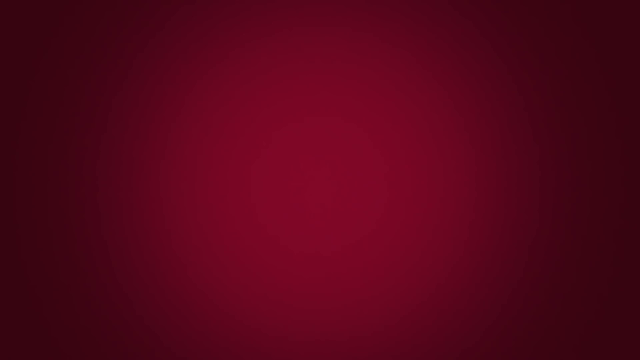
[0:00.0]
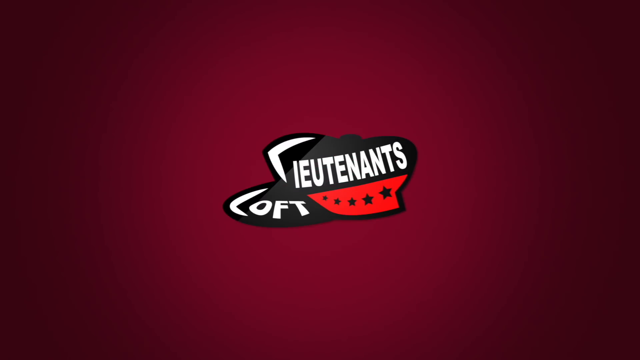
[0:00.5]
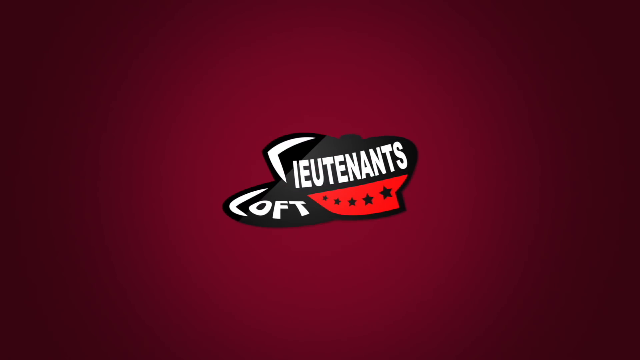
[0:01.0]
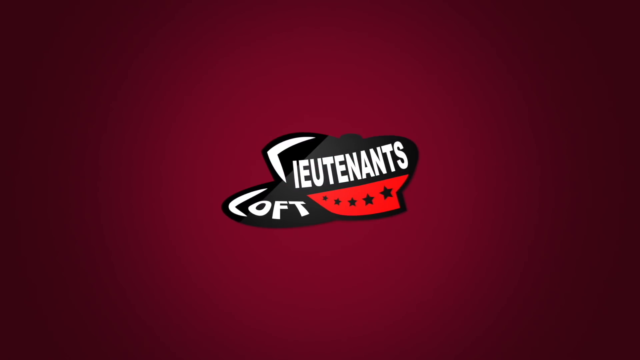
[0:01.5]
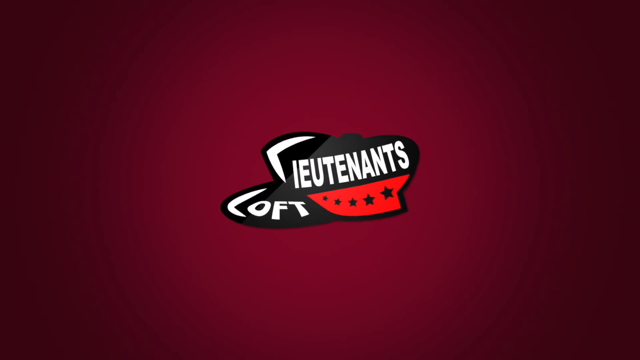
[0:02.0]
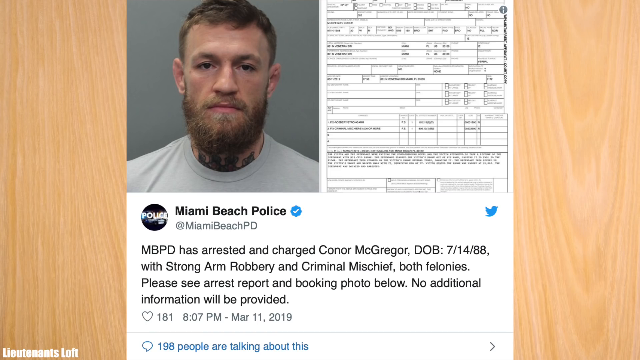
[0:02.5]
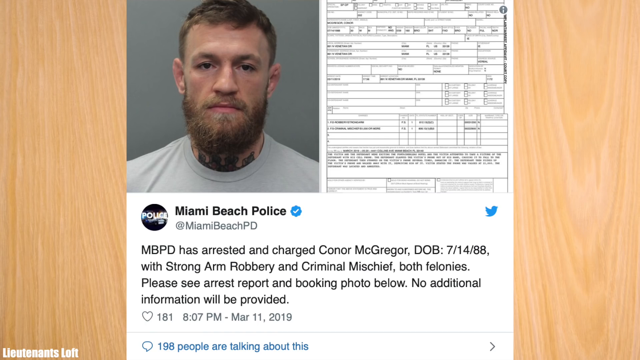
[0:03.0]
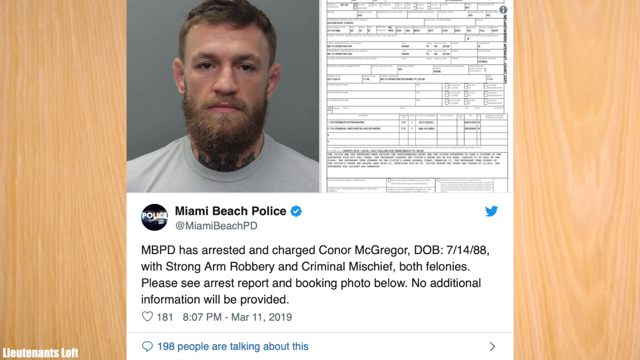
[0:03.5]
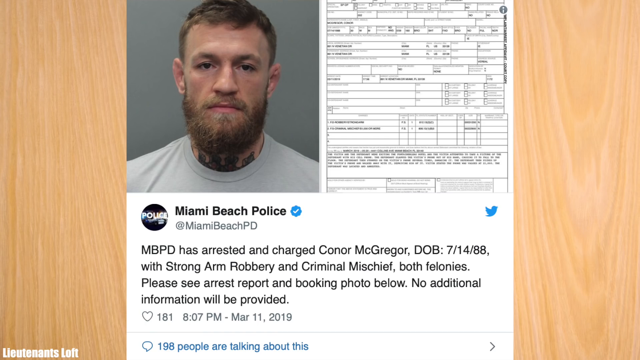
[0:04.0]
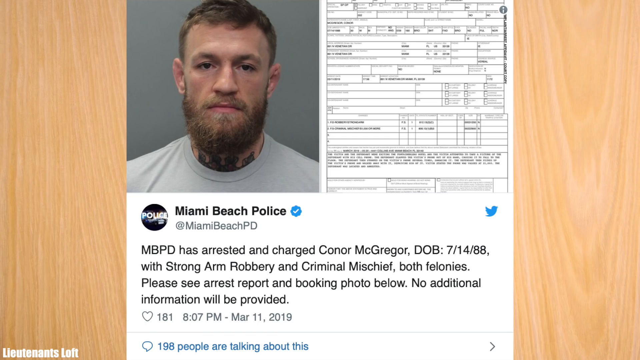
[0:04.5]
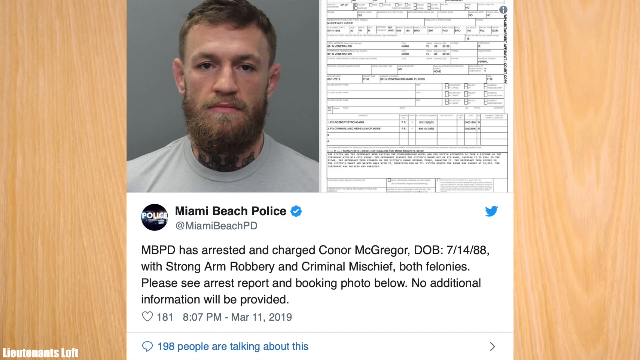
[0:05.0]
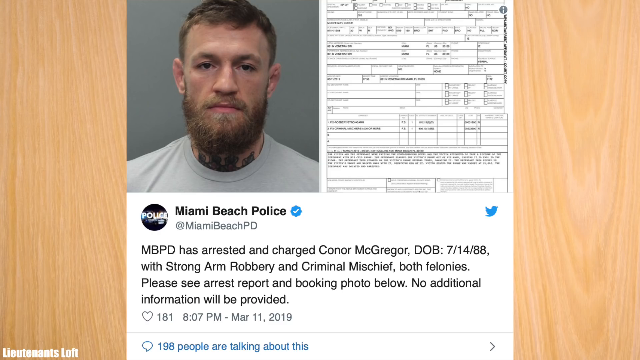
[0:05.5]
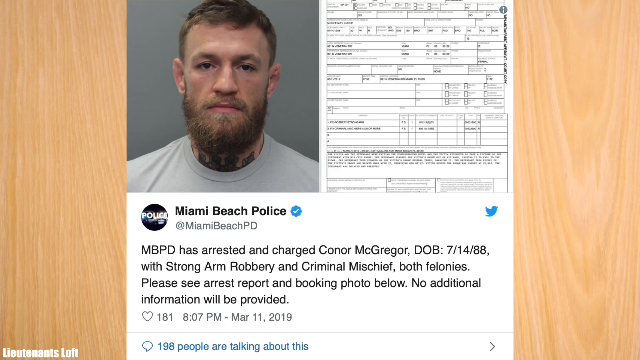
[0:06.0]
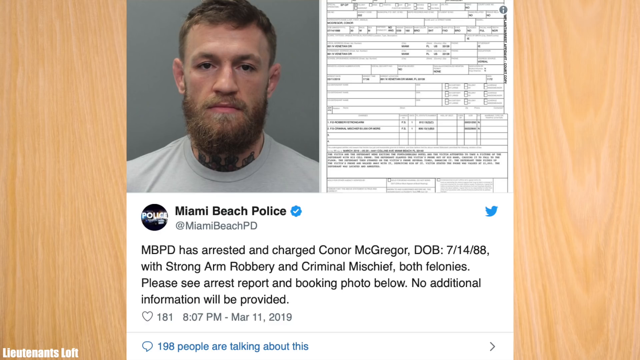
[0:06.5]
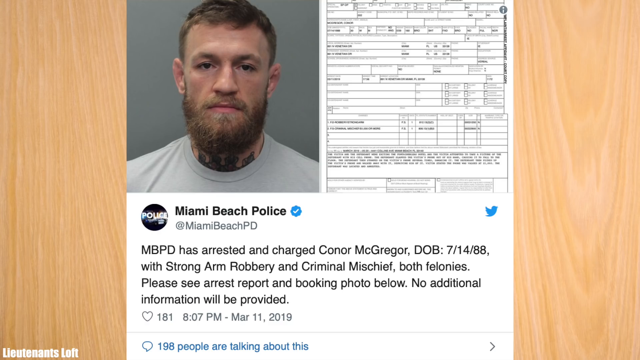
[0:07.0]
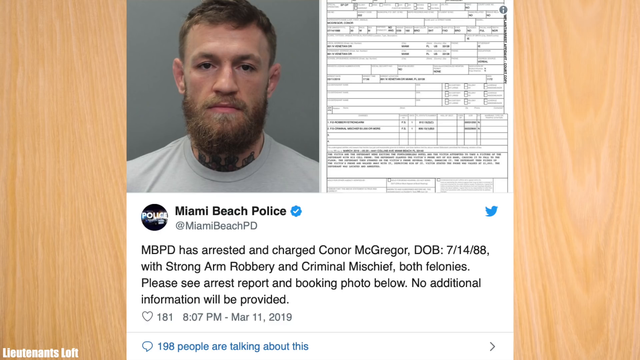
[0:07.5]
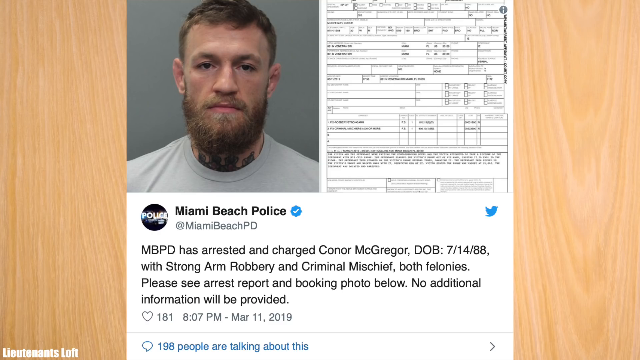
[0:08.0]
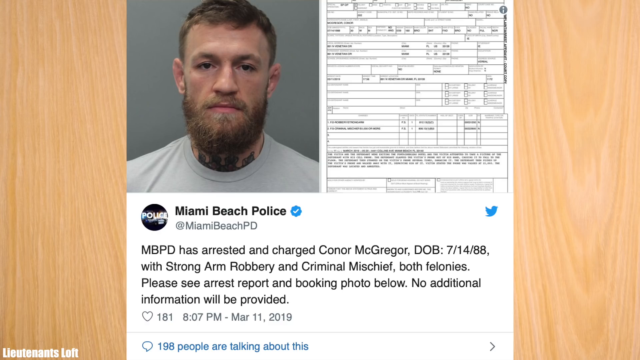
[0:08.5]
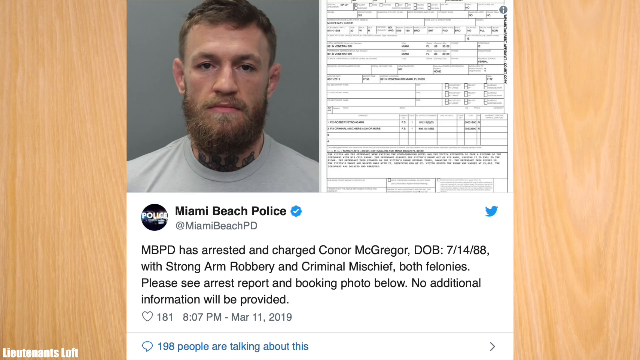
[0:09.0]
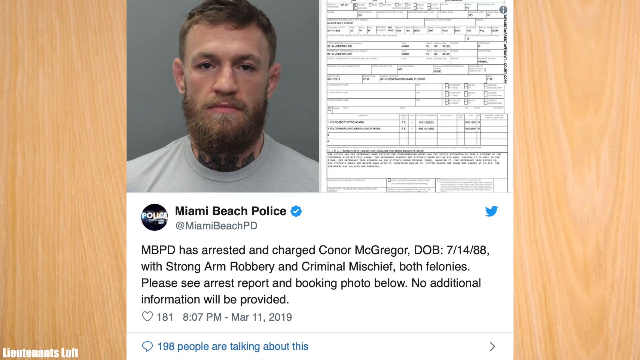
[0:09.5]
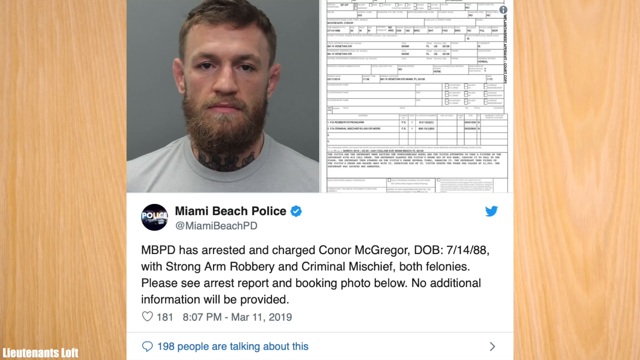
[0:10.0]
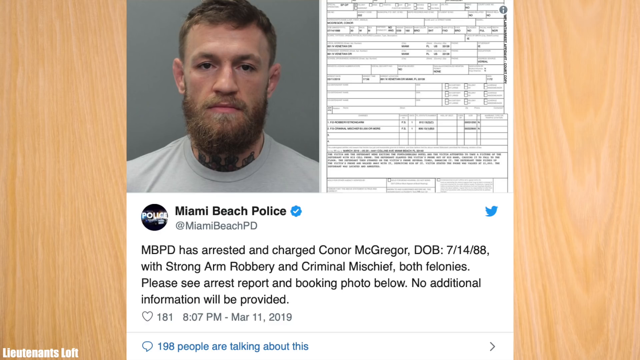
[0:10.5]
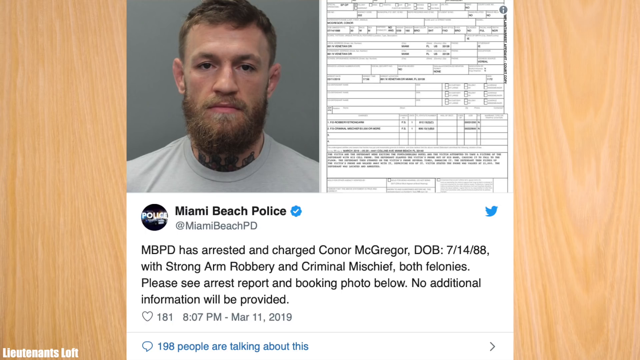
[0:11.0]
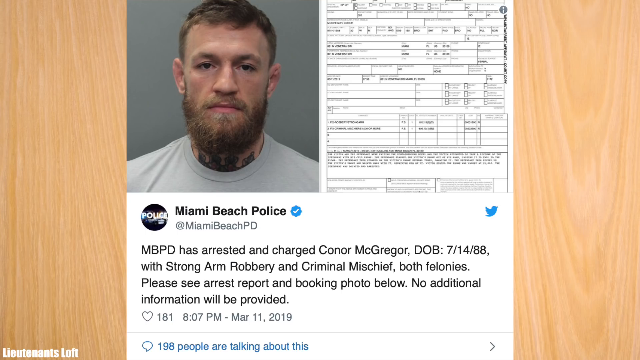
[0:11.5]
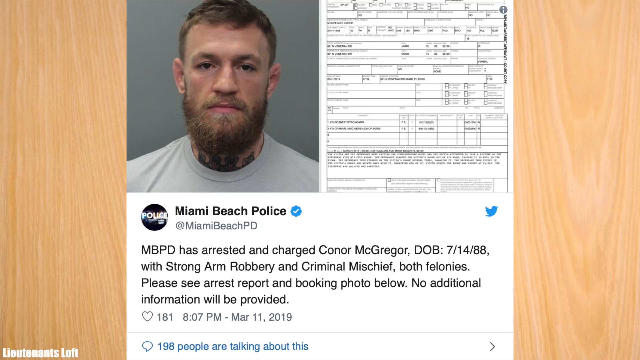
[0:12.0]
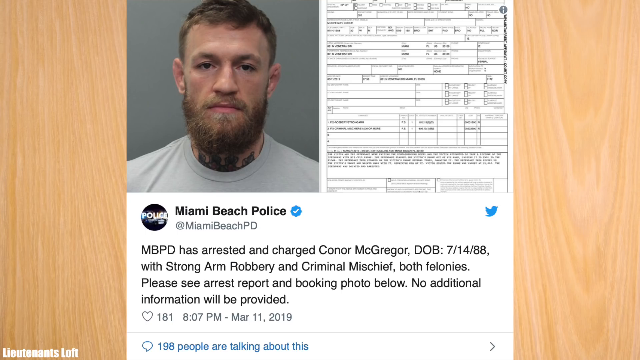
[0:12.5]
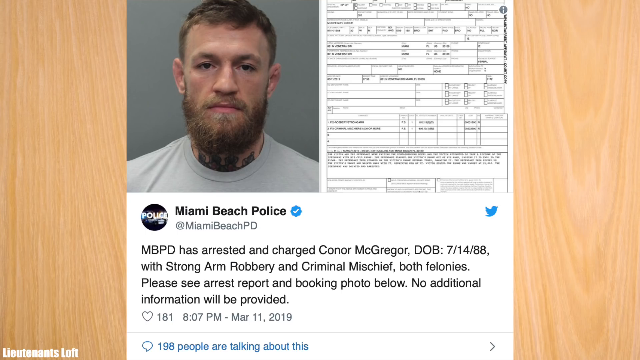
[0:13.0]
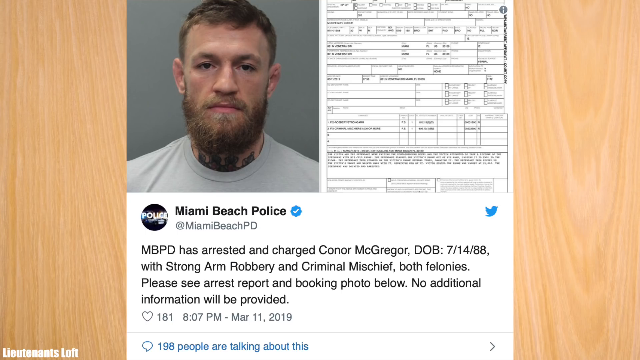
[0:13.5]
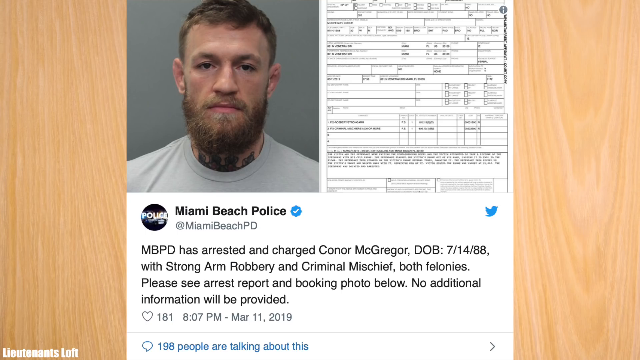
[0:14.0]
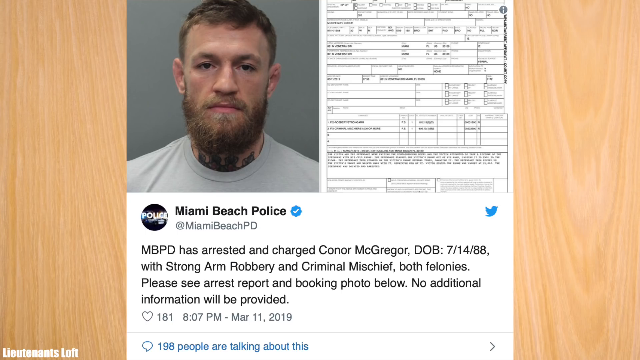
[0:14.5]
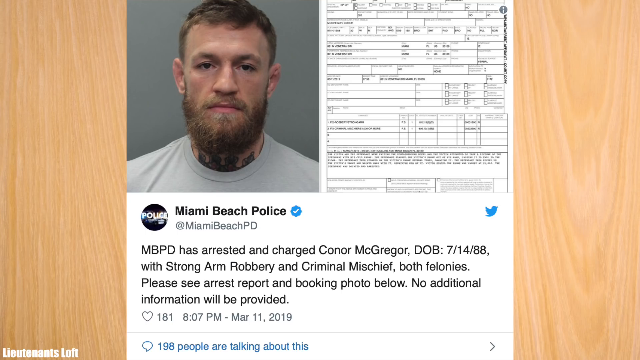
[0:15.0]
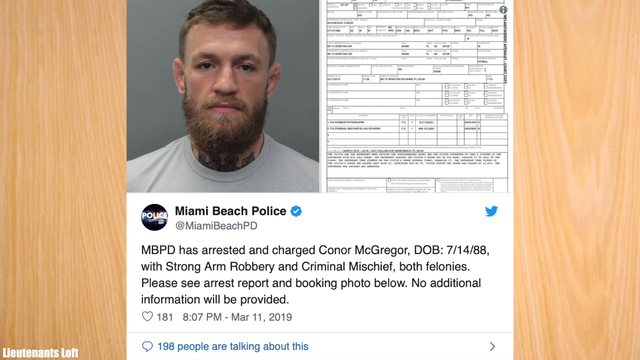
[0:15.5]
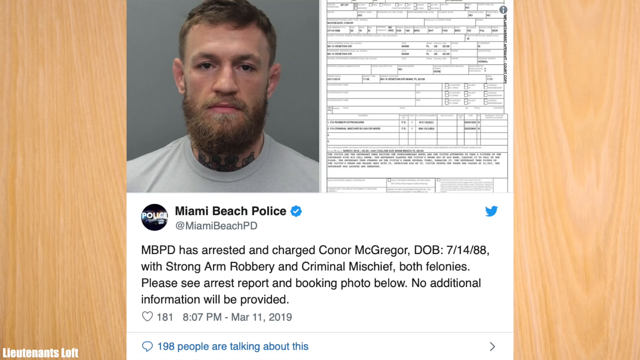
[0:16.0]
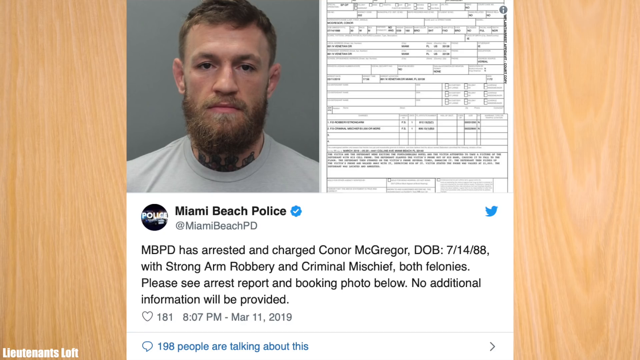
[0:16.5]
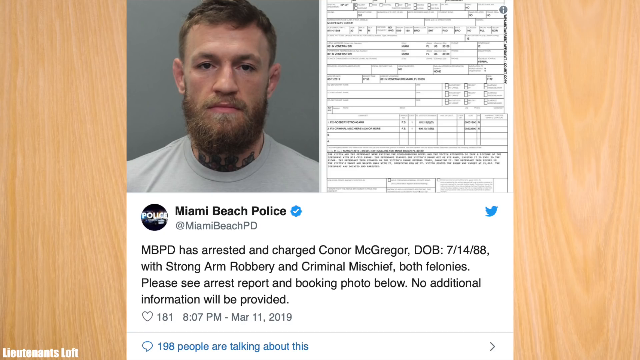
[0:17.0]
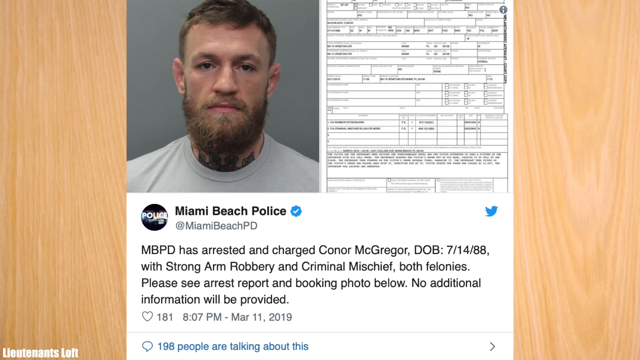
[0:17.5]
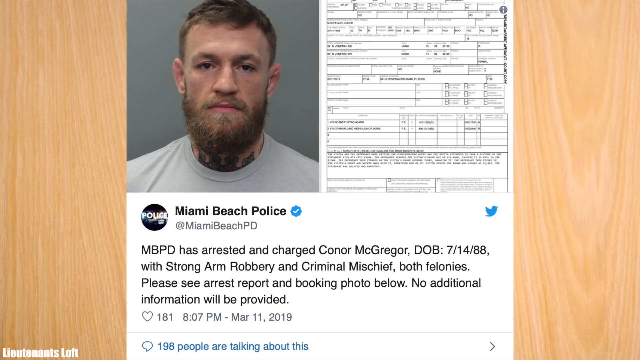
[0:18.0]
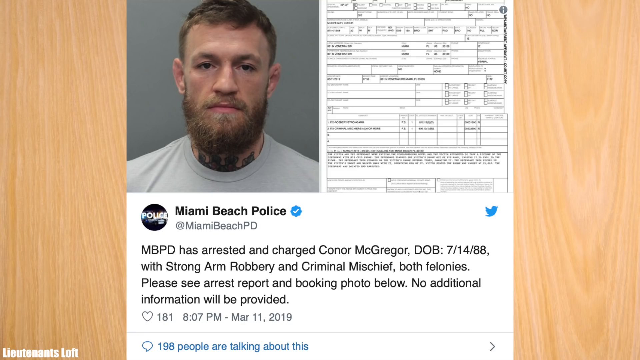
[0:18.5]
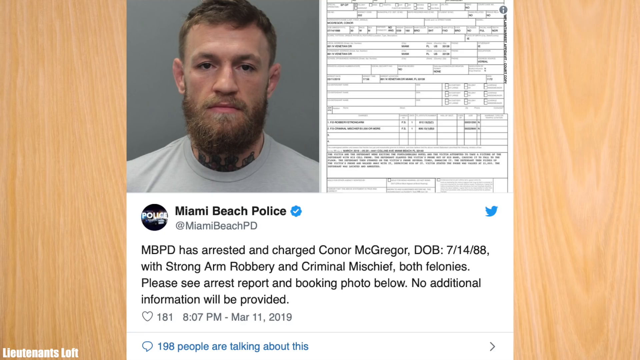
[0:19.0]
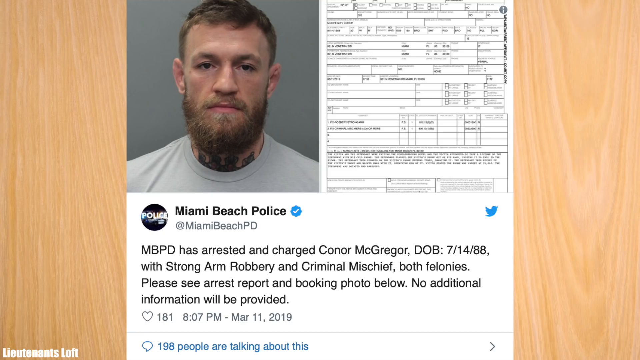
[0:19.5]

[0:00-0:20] A Miami Beach Police report is shown, with text reading "MBDP has arrested and charged Connor McGregory, date of birth 7-14-88," with charges including criminal mischief, "both felonies. Please see arrest report and booking photo below. No additional information will be provided." A booking photo of the arrested man is displayed with the charge sheet. He wears a gray round-neck shirt and has short golden hair and a beard. A report appears on the far right side of the photo, and the background of the photo is a plank board.